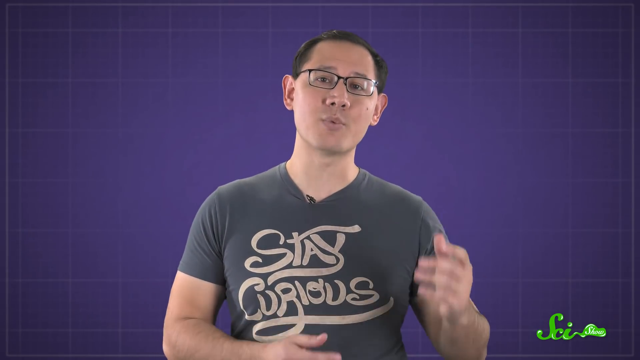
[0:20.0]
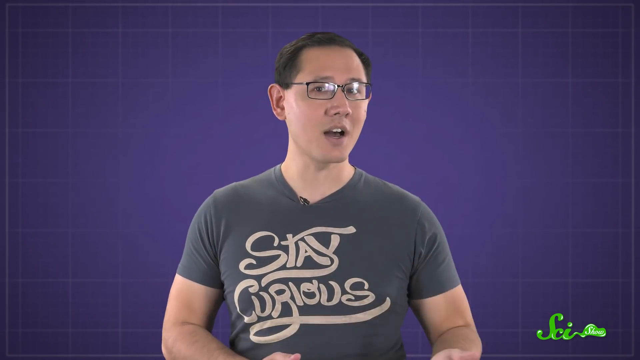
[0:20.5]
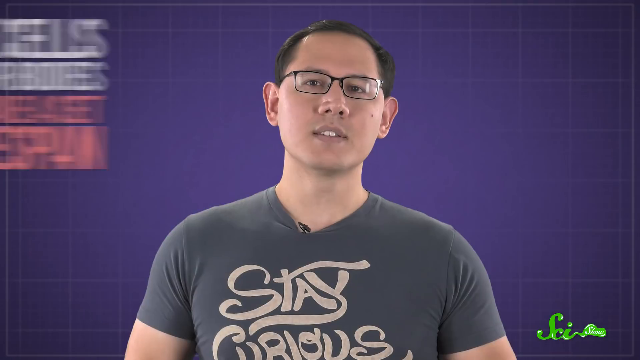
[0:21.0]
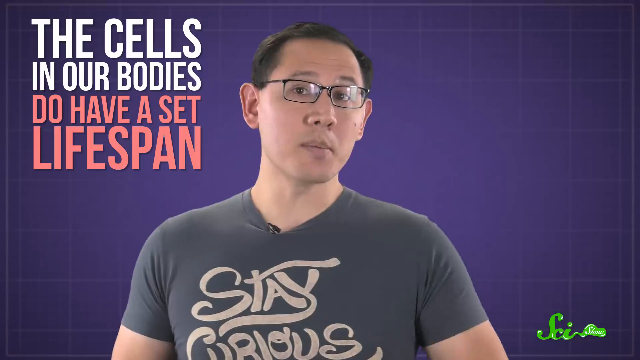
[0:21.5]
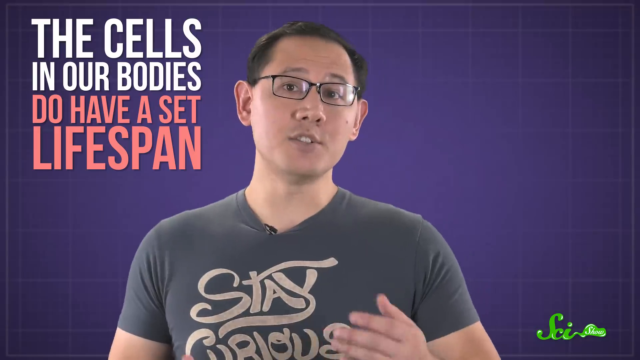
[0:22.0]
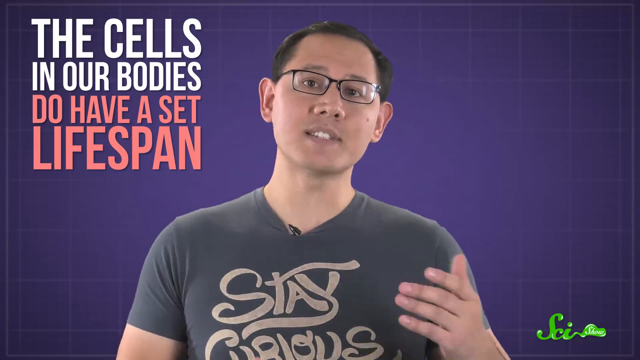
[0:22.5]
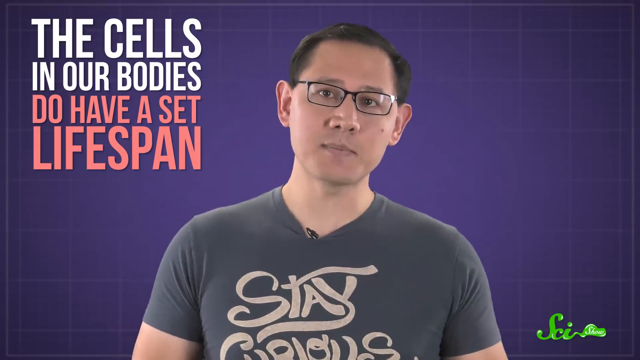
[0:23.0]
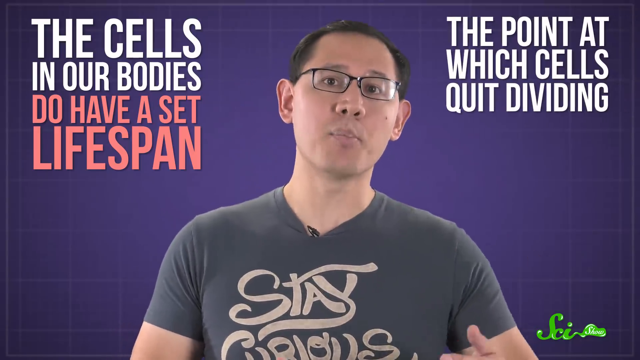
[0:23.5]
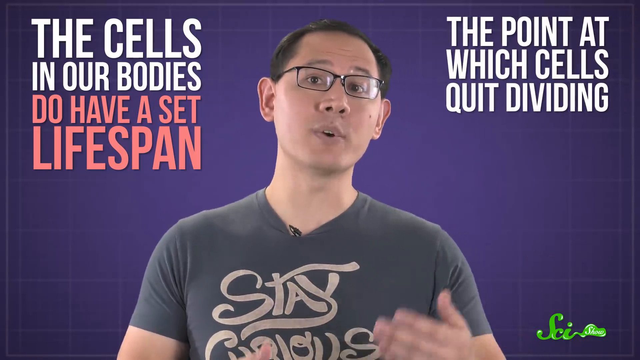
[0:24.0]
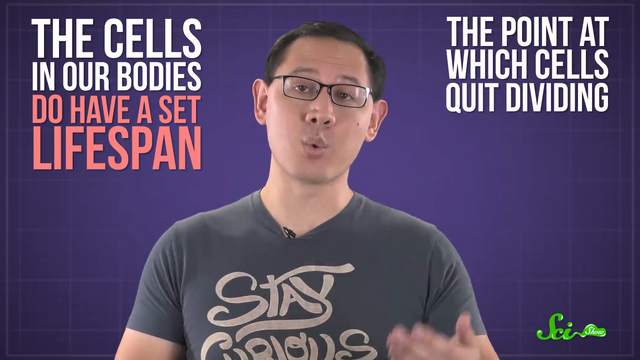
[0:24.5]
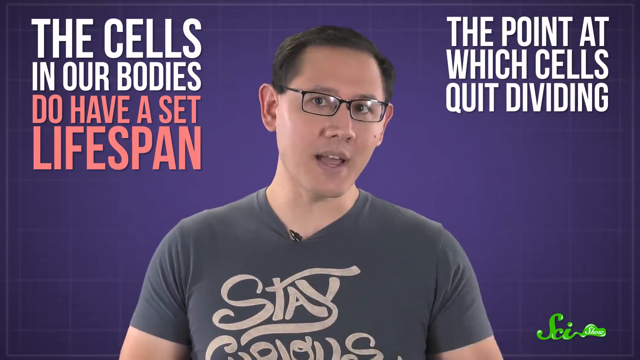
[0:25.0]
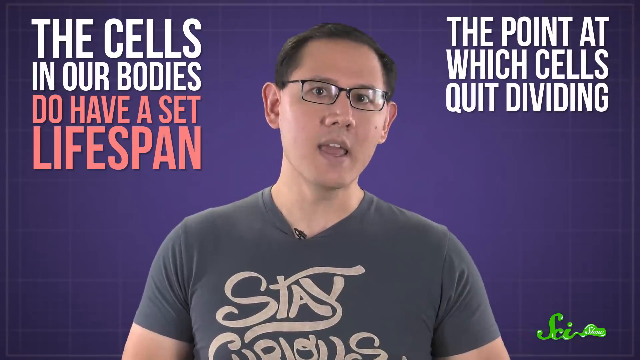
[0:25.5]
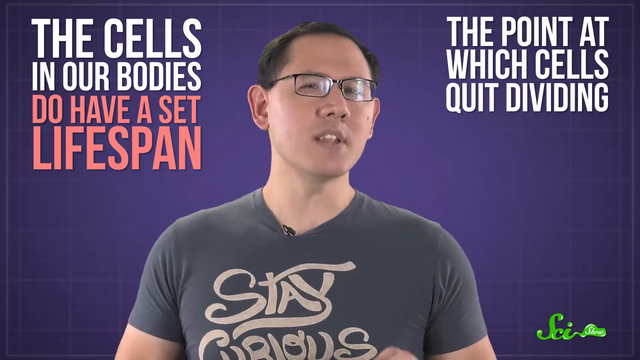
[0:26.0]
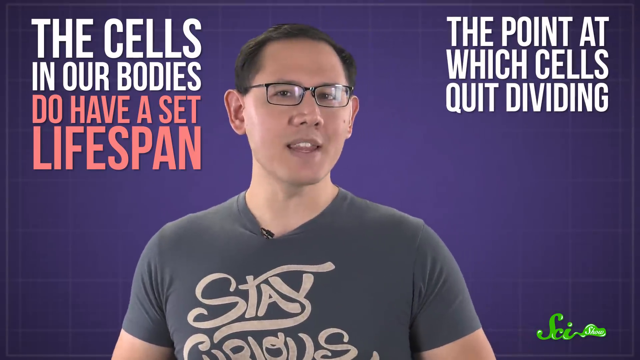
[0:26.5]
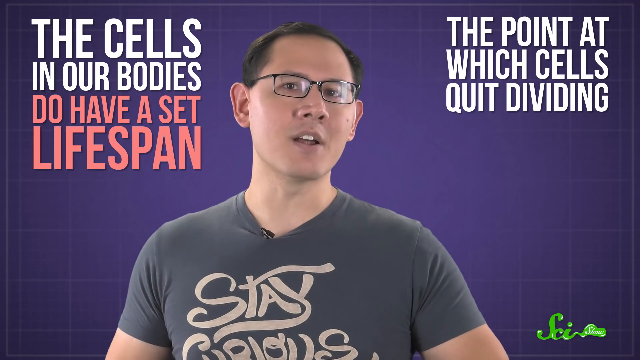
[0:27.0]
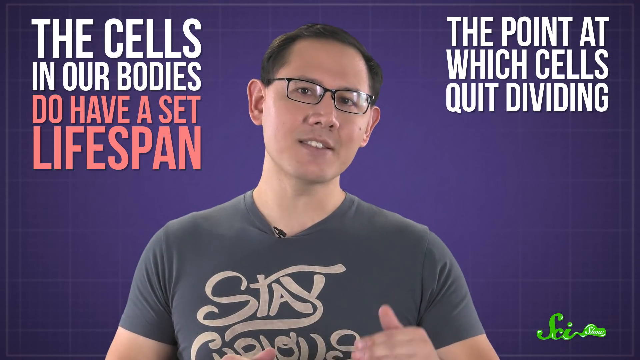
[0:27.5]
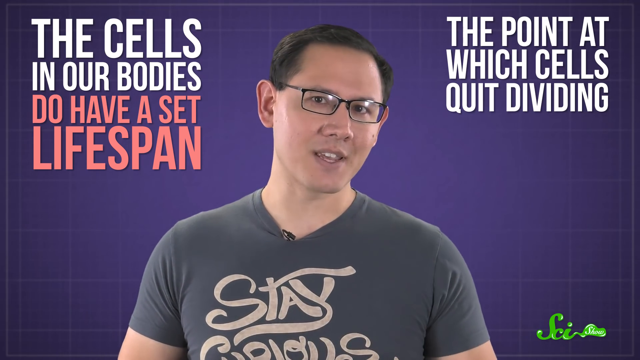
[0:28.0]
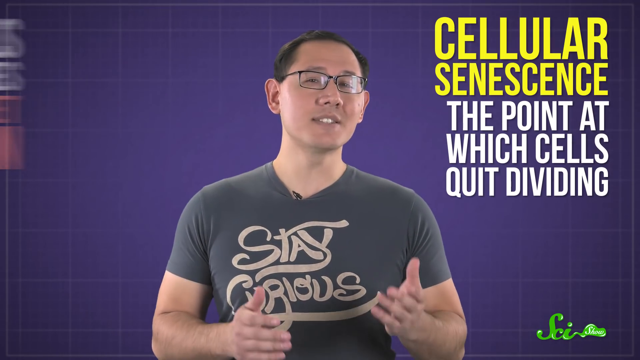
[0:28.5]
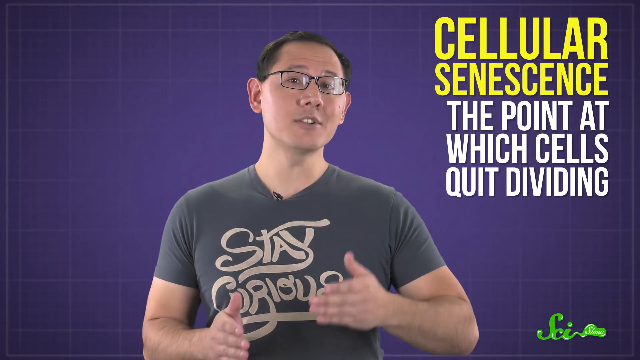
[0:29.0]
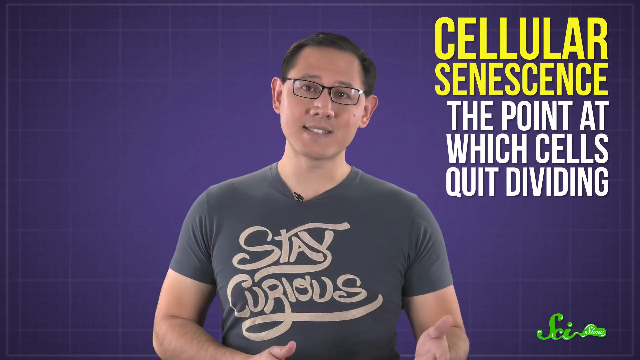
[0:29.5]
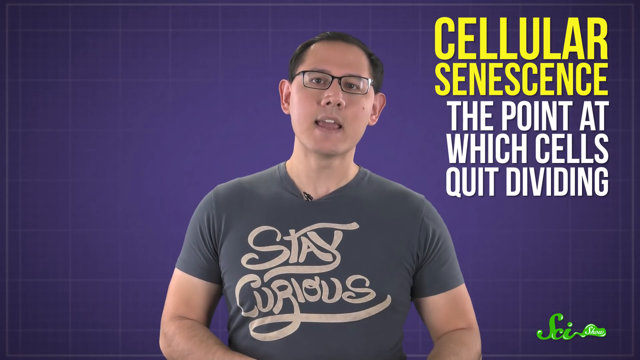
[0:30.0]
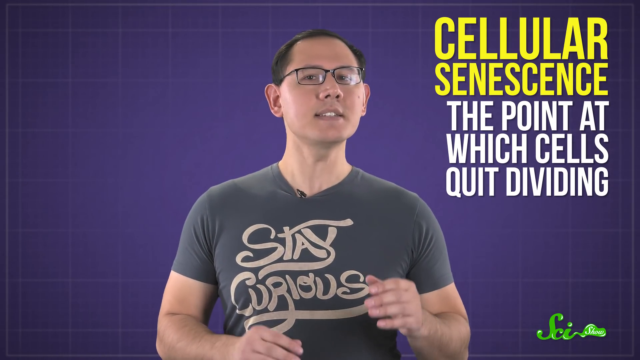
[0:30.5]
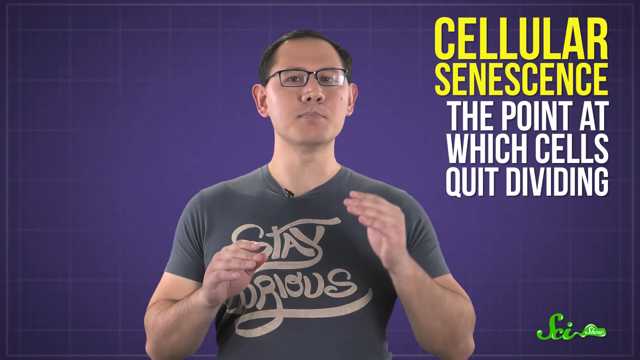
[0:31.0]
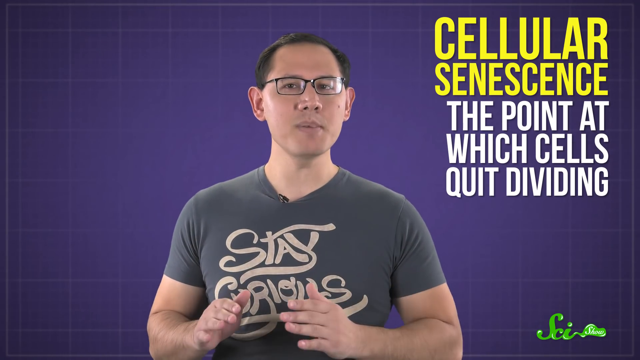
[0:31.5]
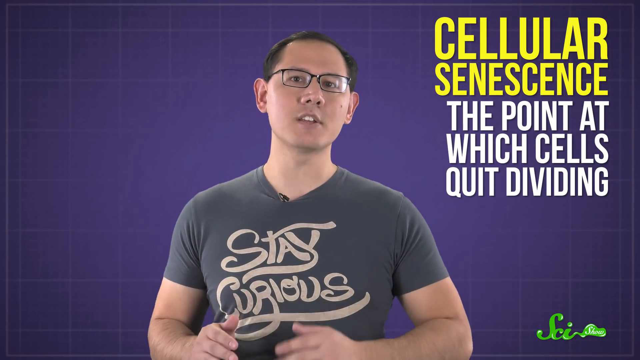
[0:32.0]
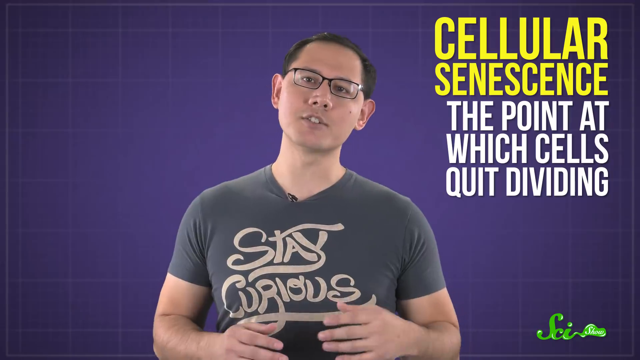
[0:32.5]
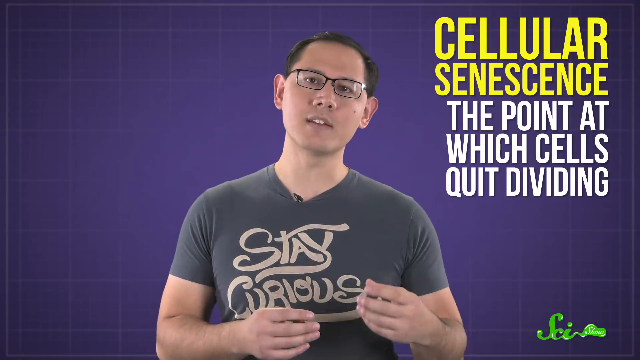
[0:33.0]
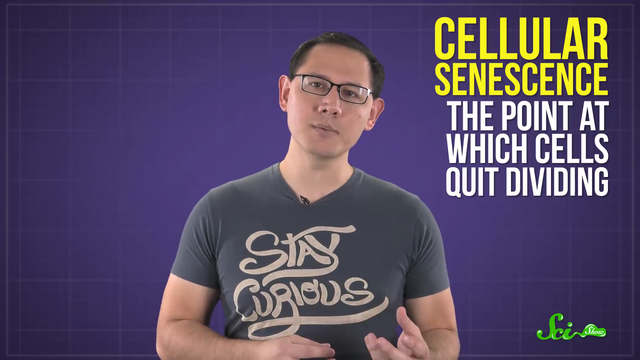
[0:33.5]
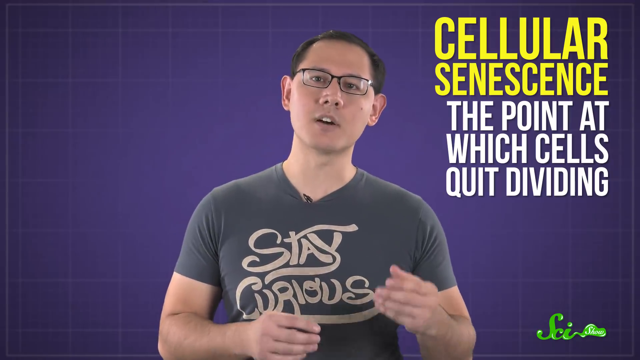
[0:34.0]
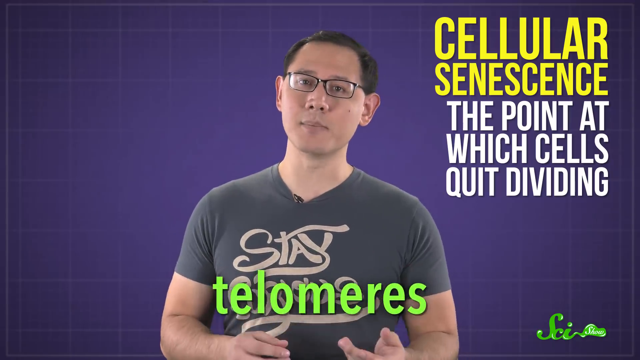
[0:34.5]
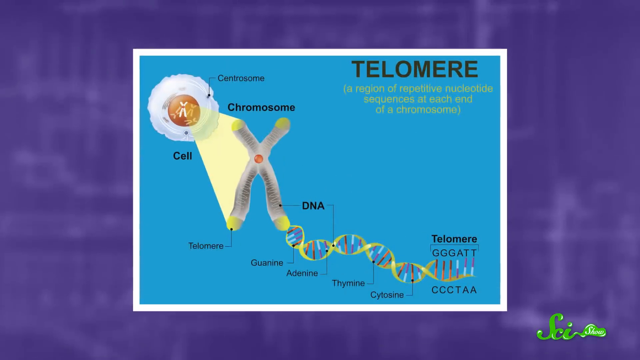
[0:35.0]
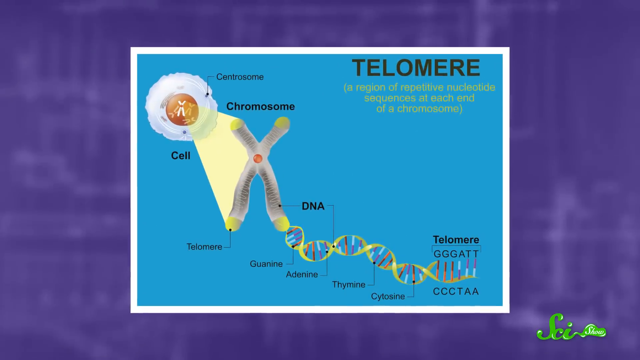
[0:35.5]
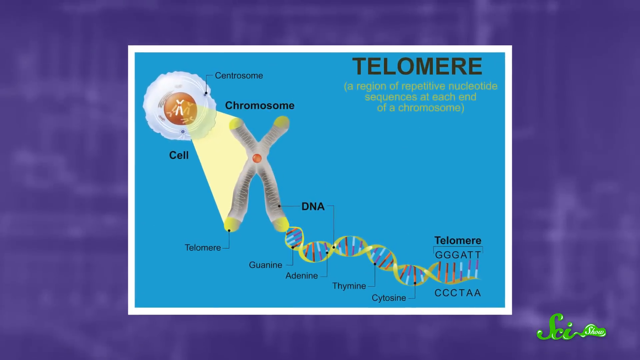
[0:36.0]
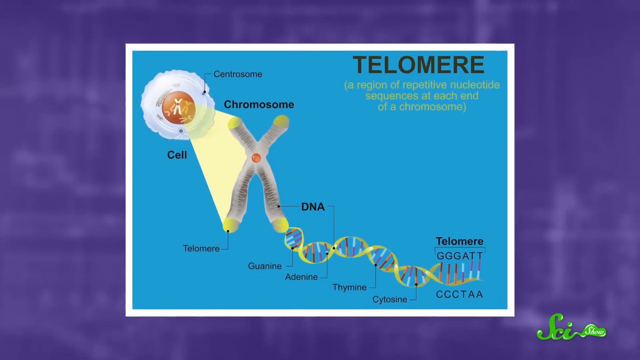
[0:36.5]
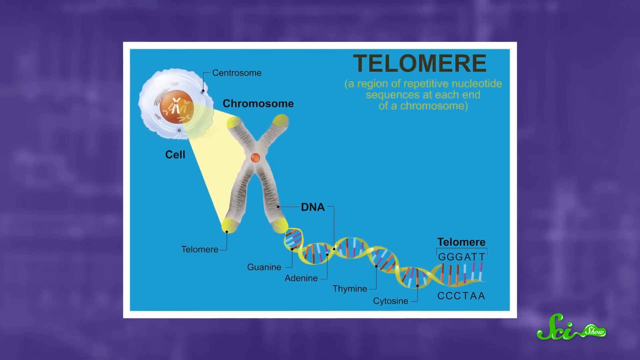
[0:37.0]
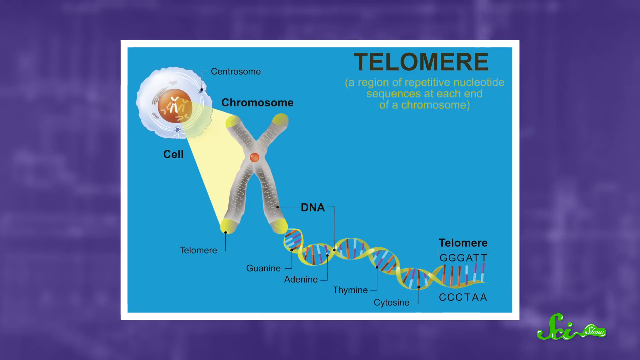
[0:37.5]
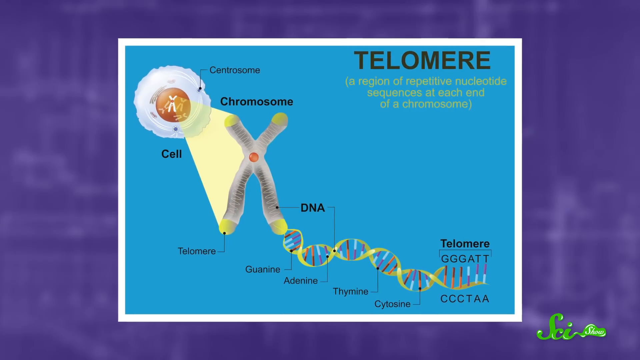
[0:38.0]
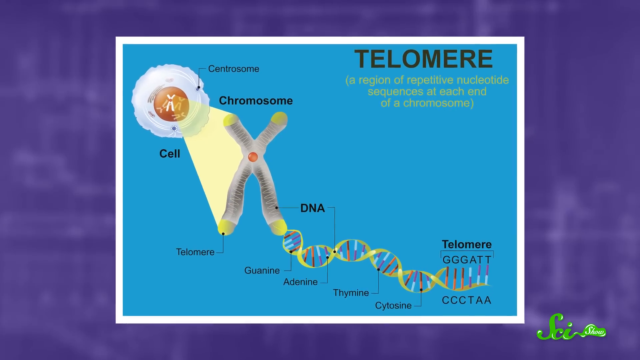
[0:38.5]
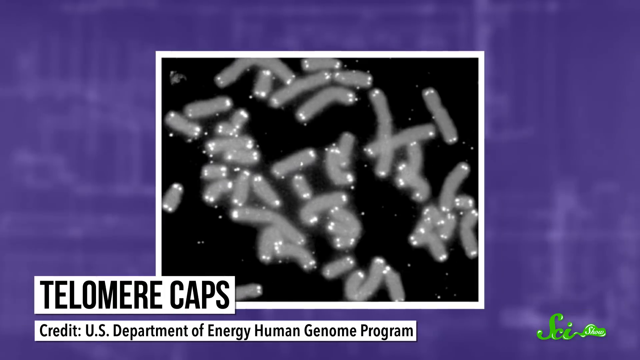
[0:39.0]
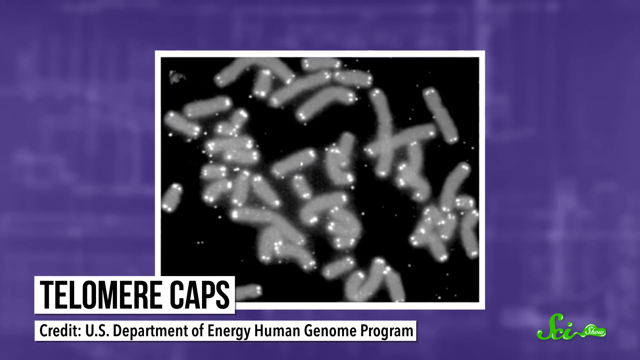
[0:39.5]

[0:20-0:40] A man with short, dark hair speaks to the camera in front of a purple background. He wears a gray shirt with the words "stay curious" on it. In the upper left corner of the screen, yellow text reads "the cells in our bodies do have a set lifespan, the point at which cells quit dividing. Cellular senescence." The word "telomere" appears. A diagram then shows a chromosome and a strand of DNA, with the word "telomere" in black font and the words "a region of repetitive nucleotide sequences at each end of a chromosome." Next, a black and white image labeled "telomere caps" appears in the center of the screen against a purple background.